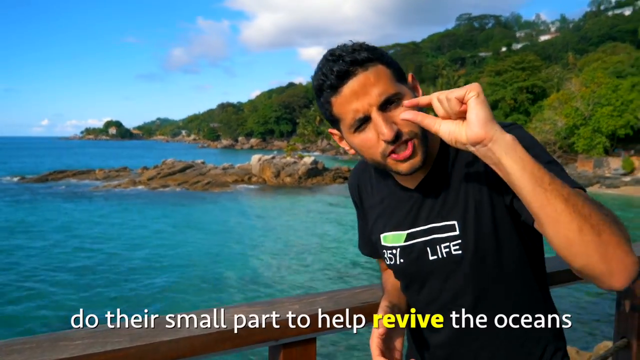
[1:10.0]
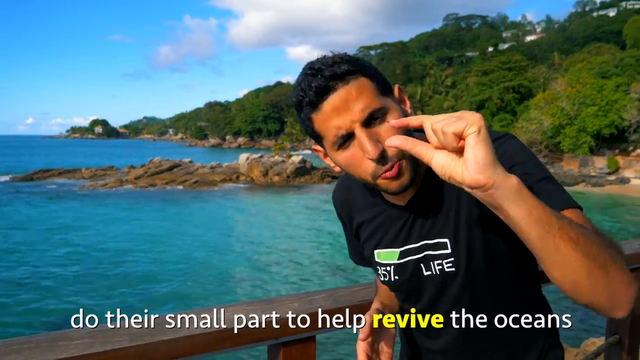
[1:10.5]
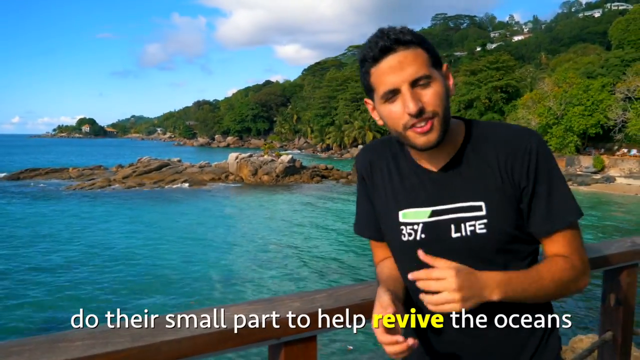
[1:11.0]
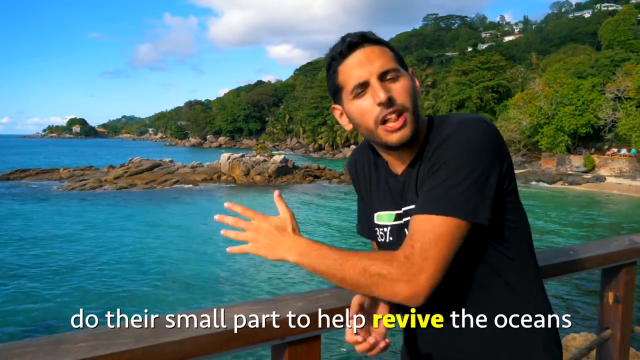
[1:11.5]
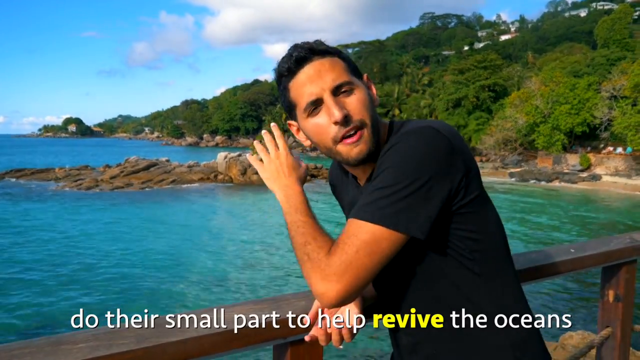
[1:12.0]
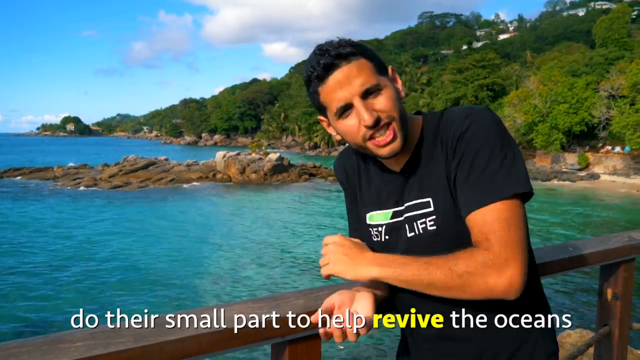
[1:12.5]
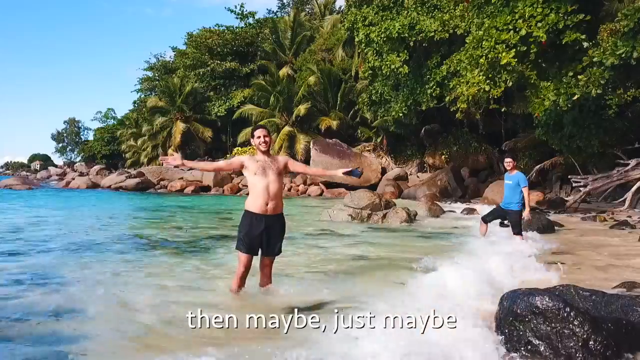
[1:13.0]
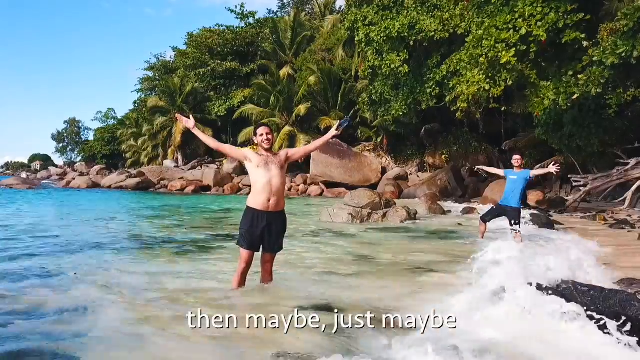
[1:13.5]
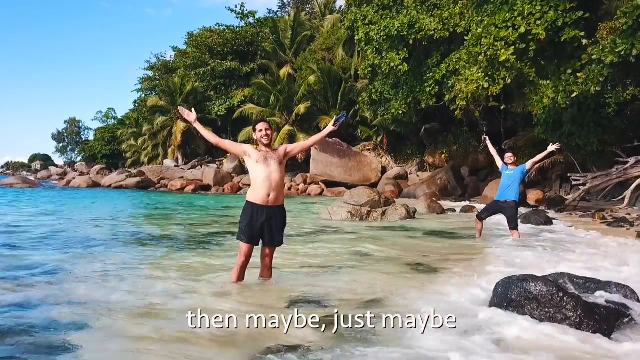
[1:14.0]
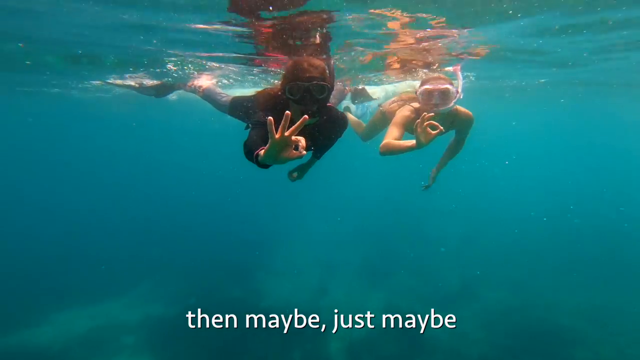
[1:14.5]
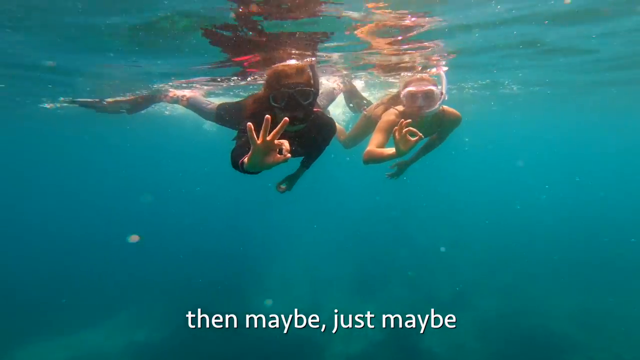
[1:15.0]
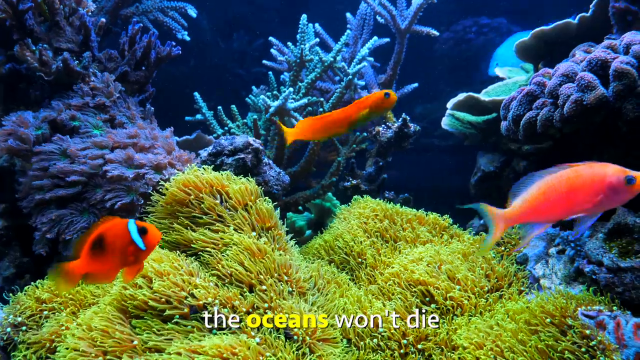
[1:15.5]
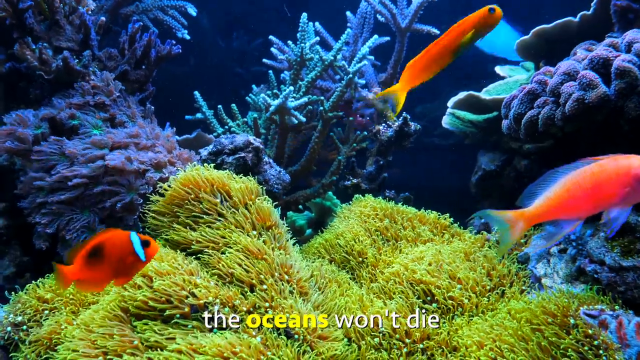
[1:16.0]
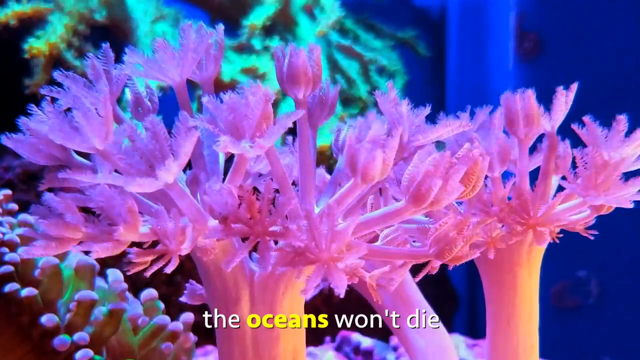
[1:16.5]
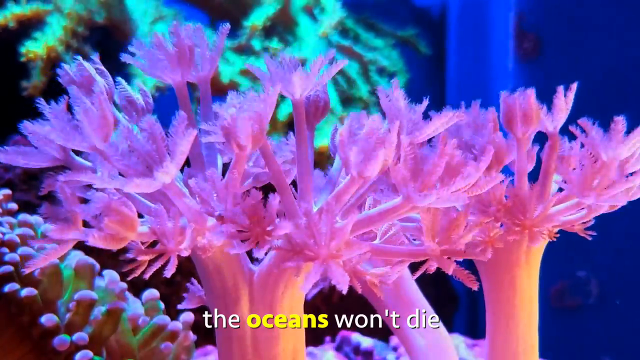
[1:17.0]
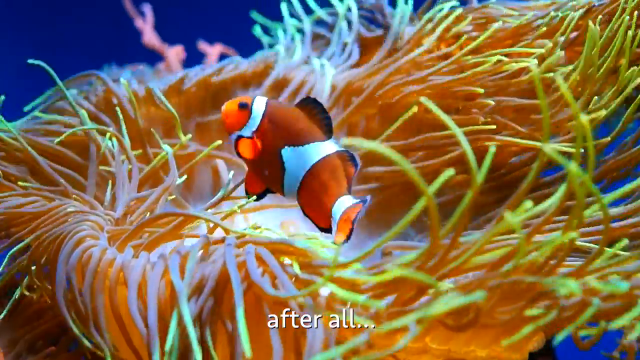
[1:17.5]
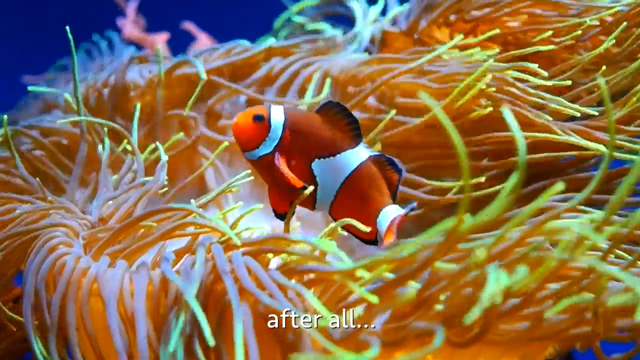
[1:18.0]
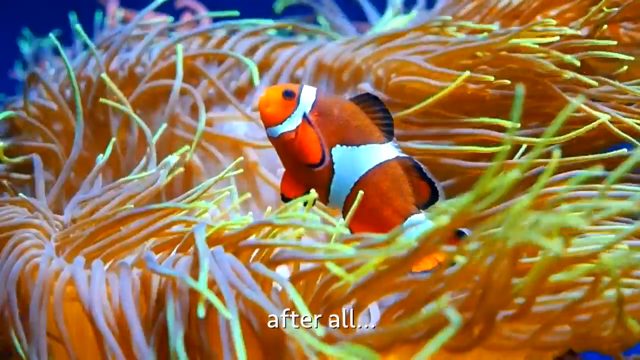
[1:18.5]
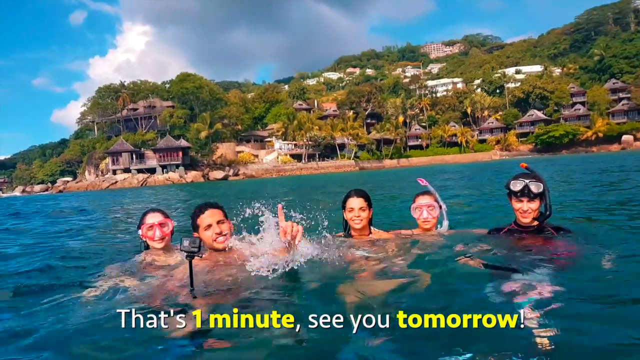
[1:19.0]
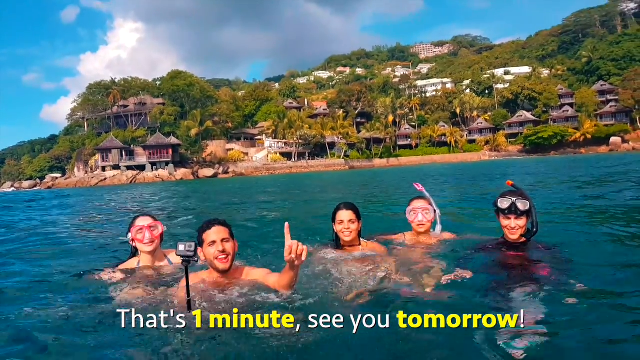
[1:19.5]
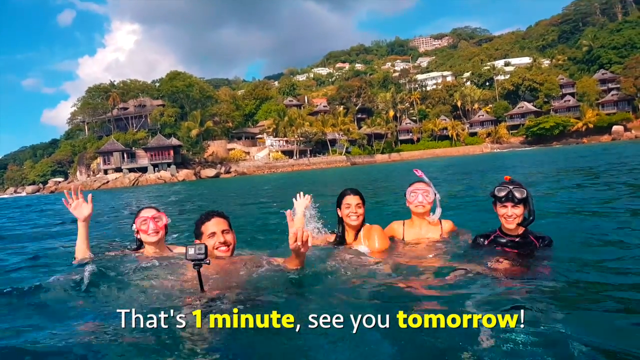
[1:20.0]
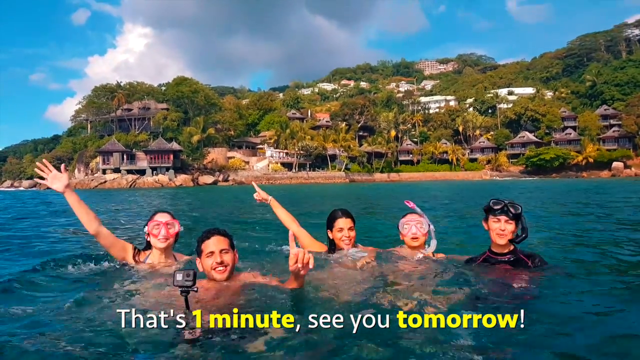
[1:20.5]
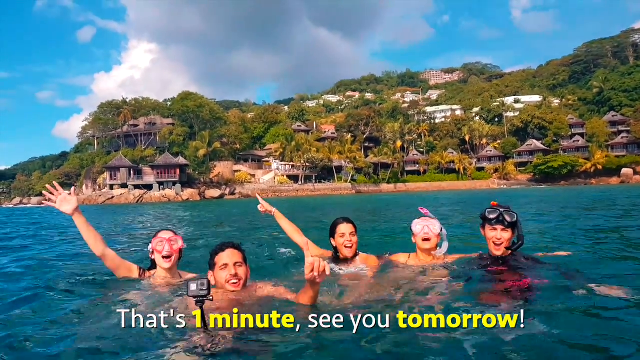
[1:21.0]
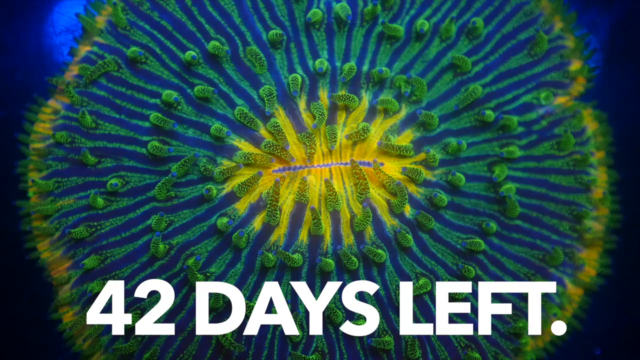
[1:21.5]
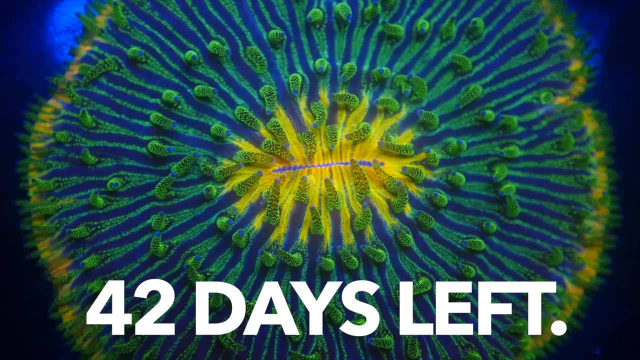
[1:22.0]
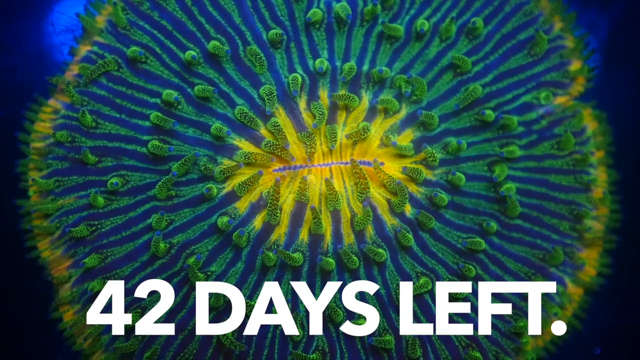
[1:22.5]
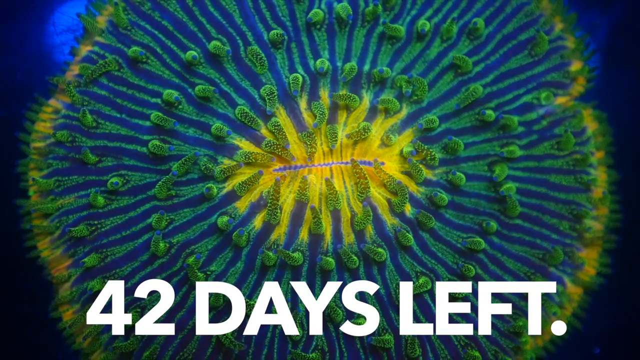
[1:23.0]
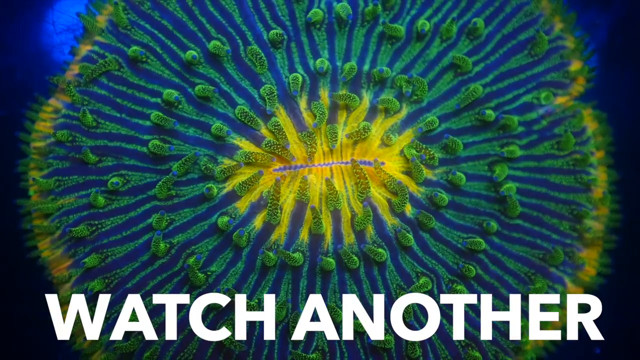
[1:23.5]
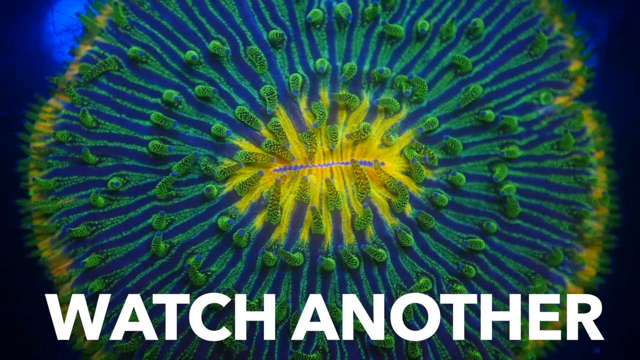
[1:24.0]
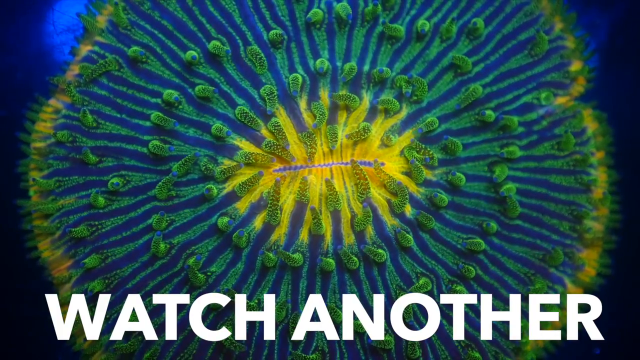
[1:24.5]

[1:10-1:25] The text continues: "if people do their small part to help revive the oceans, then maybe, just maybe, the oceans won't die. After all... that's one minute, see you tomorrow." At the end, very large, bold text across the bottom reads "42 days left, watch another". People stand on the beach with their hands up, there are more shots of fish and a couple of people skin diving, and the people in the water with their selfie stick tread water. The island has rocky shores, lush green plants and trees dotting a fairly steep coastline, houses nestled into the hillside and very clear water. The live corals shown are pink, cream, blue and green, with clownfish and other fish swimming around. Everything above water looks extremely healthy and clean, and the water itself looks very clean.